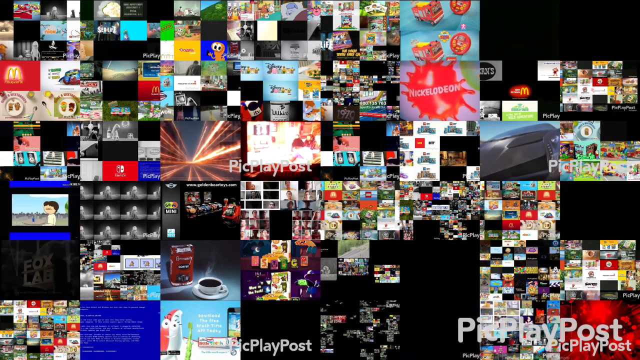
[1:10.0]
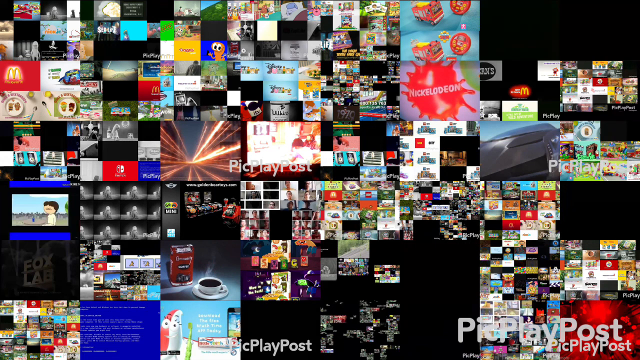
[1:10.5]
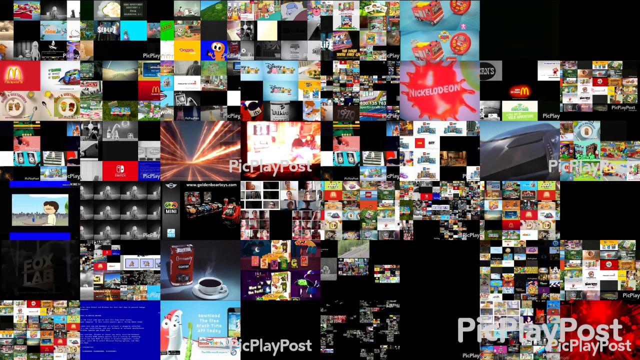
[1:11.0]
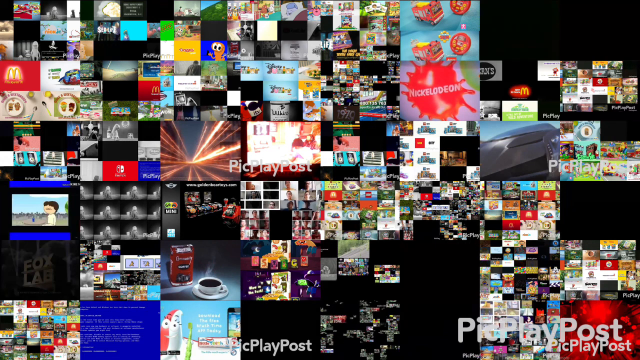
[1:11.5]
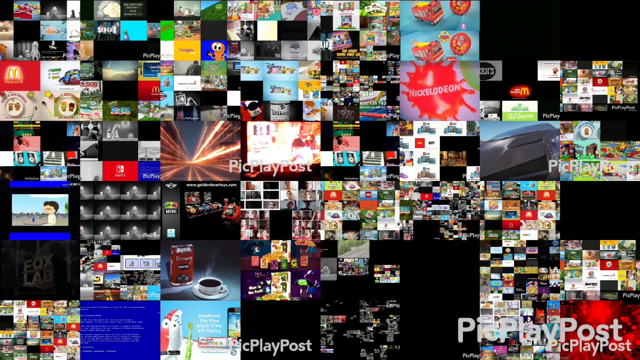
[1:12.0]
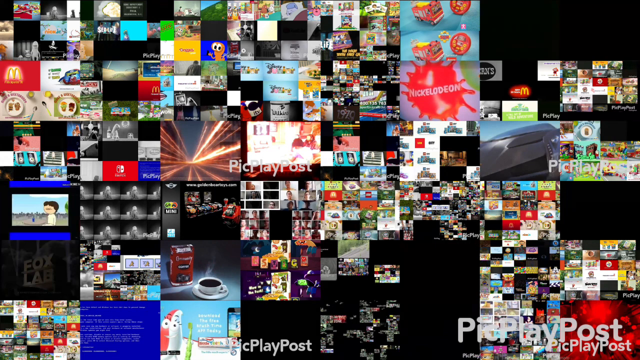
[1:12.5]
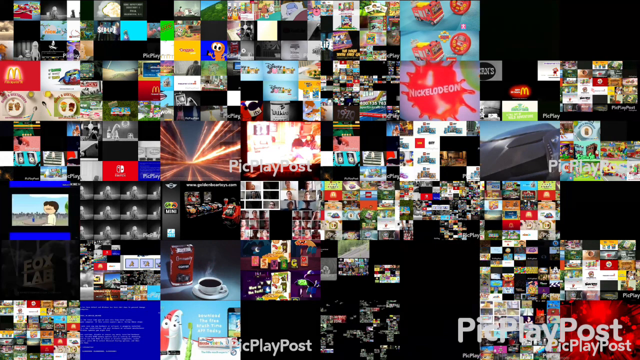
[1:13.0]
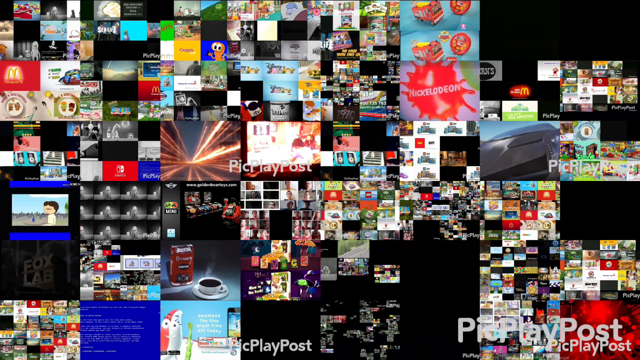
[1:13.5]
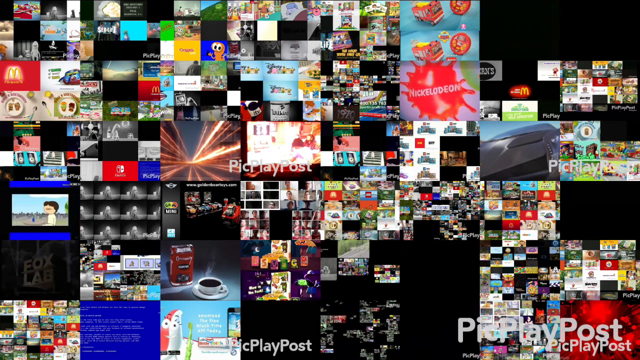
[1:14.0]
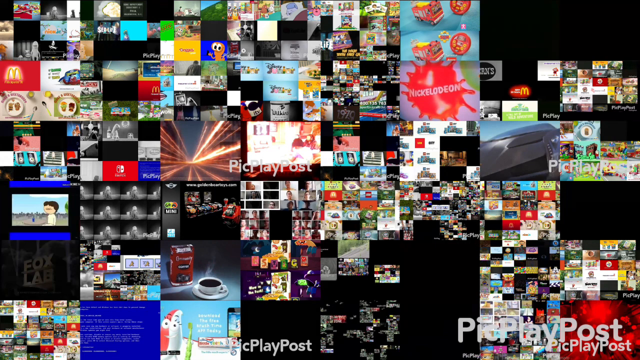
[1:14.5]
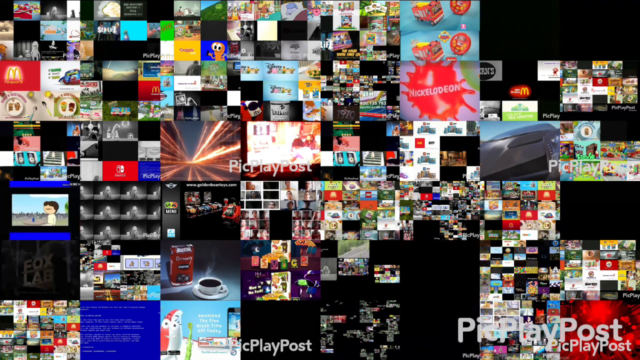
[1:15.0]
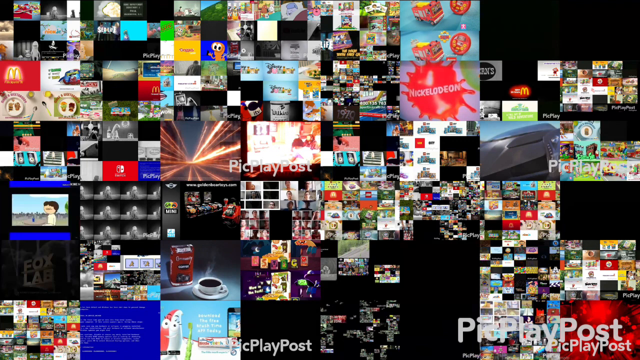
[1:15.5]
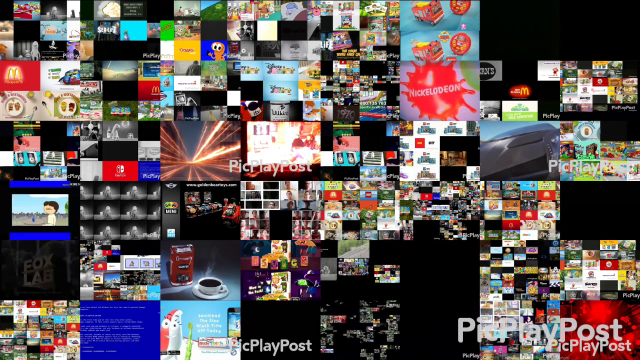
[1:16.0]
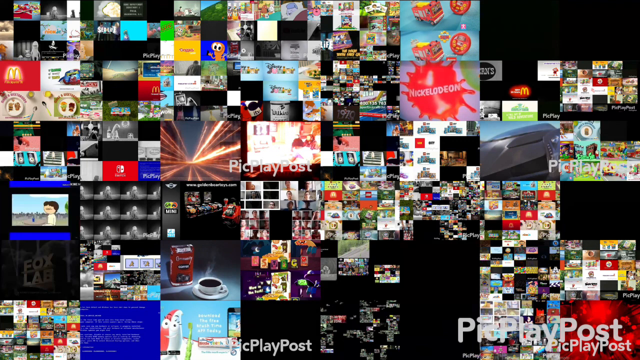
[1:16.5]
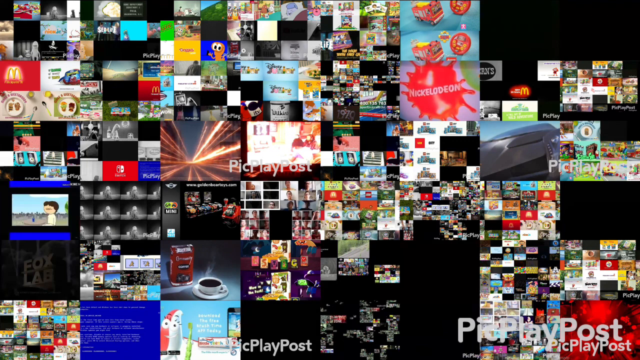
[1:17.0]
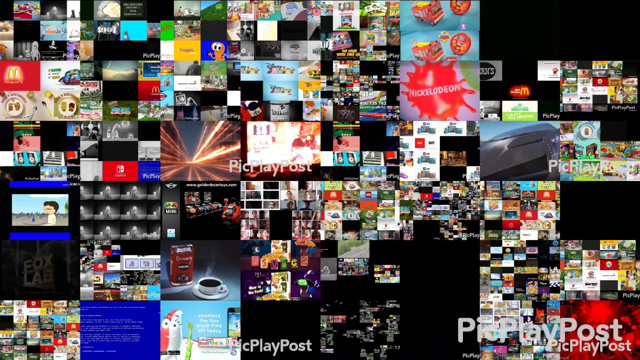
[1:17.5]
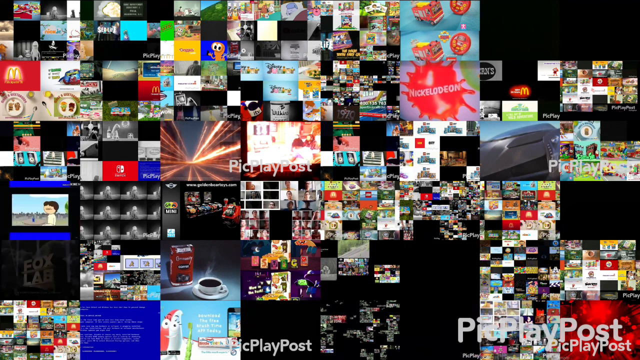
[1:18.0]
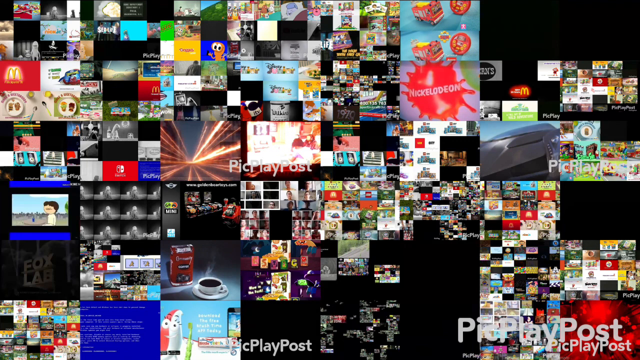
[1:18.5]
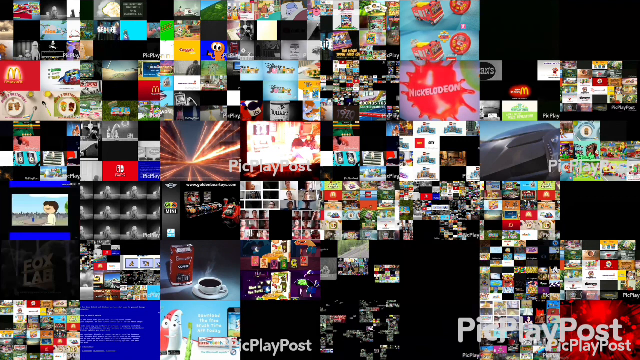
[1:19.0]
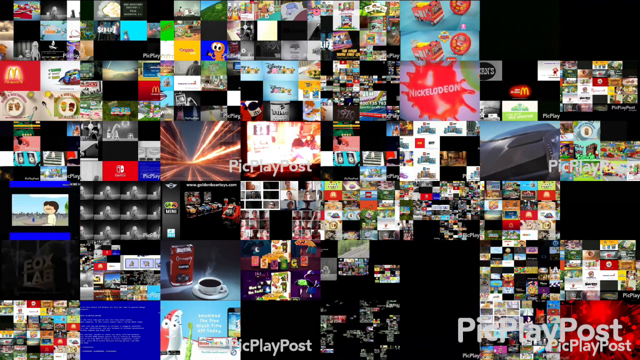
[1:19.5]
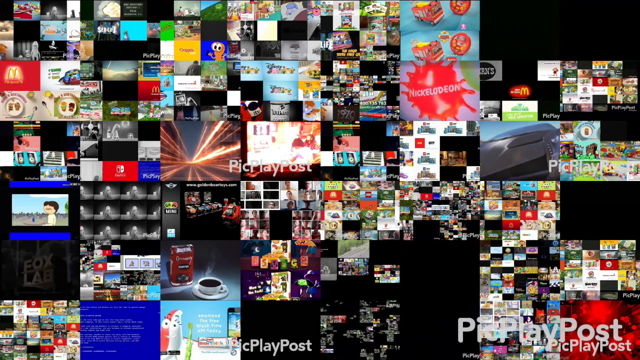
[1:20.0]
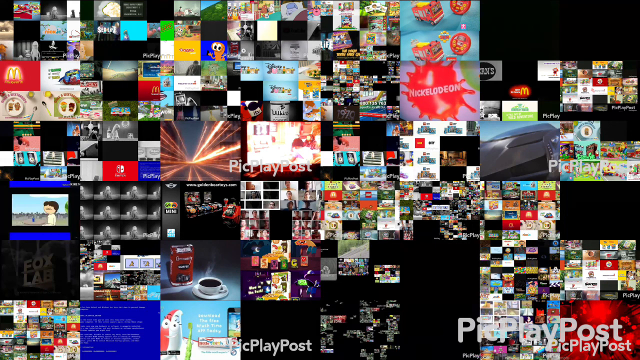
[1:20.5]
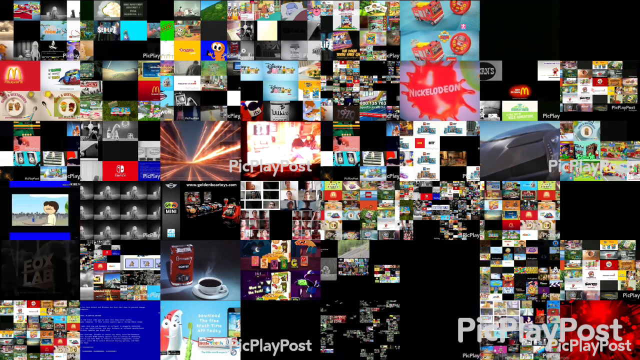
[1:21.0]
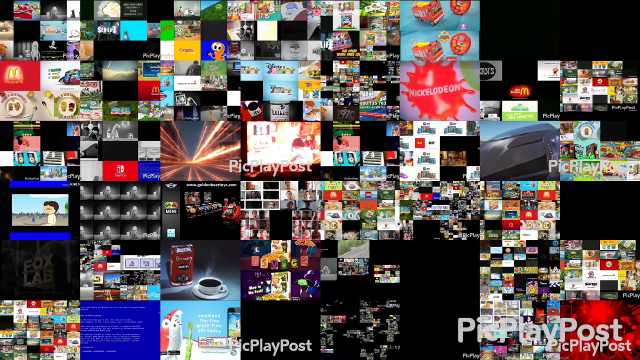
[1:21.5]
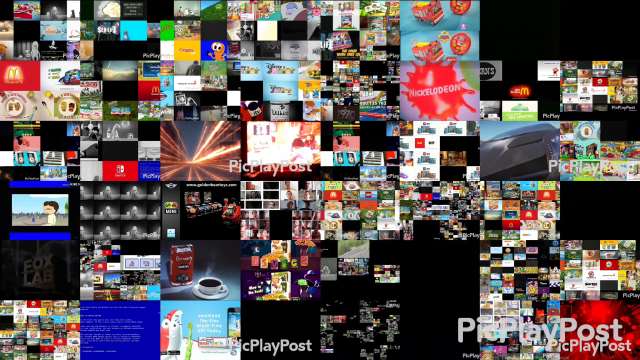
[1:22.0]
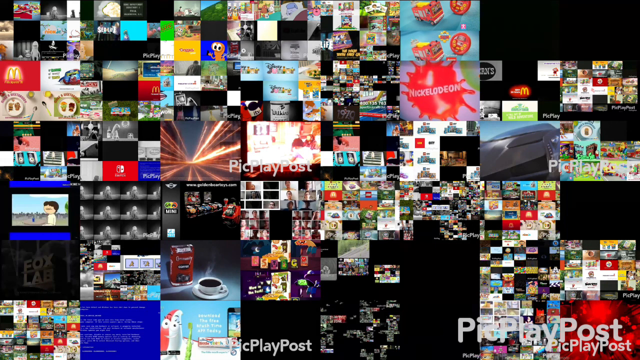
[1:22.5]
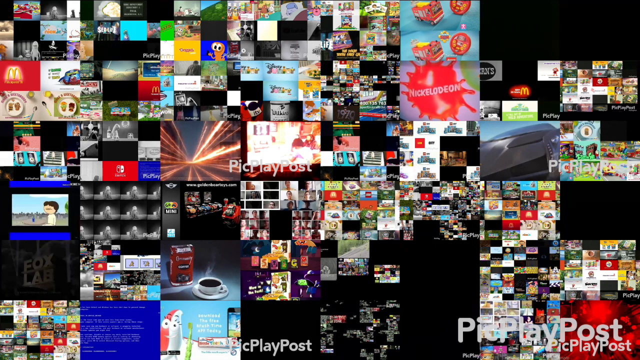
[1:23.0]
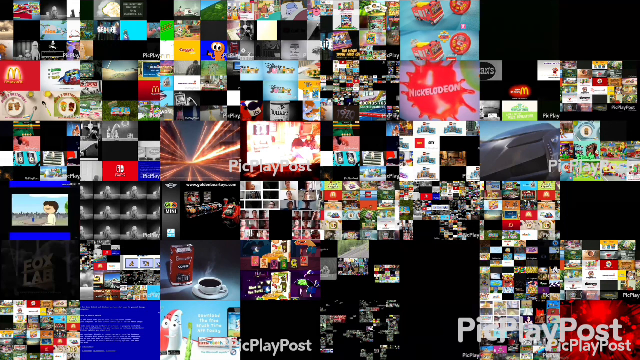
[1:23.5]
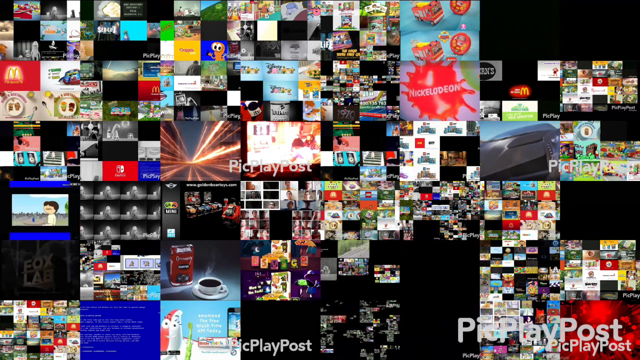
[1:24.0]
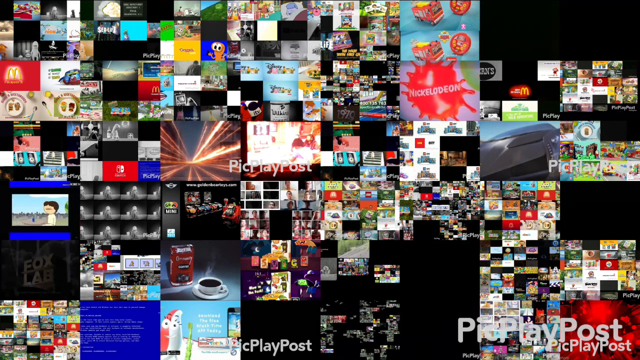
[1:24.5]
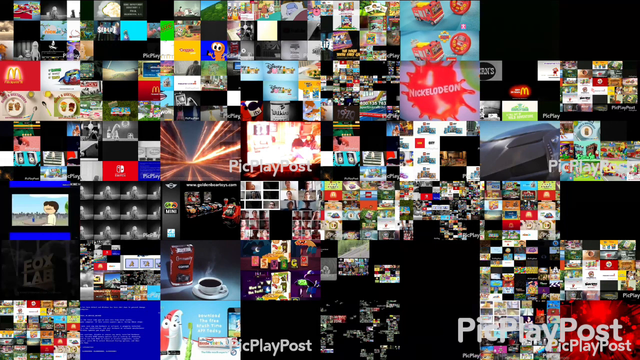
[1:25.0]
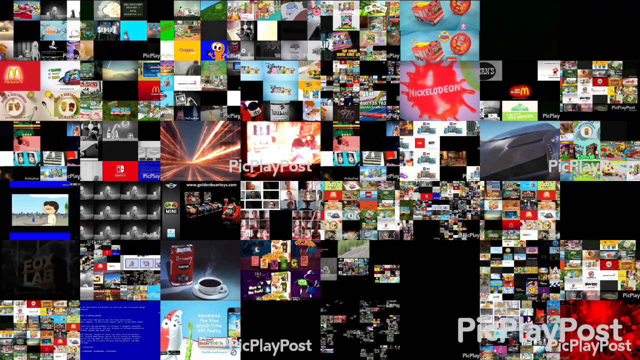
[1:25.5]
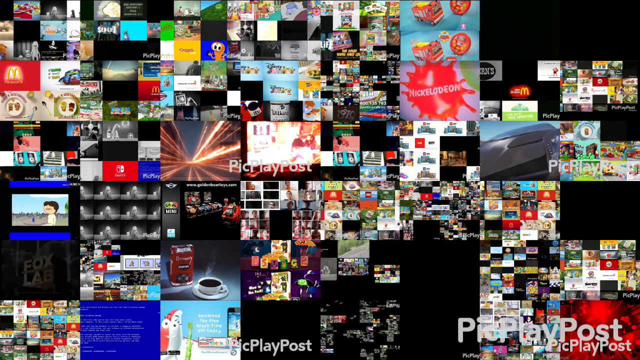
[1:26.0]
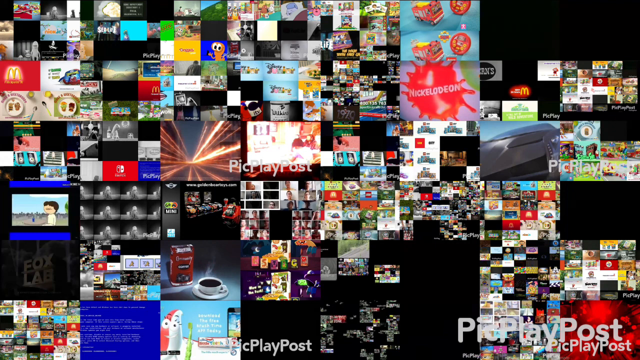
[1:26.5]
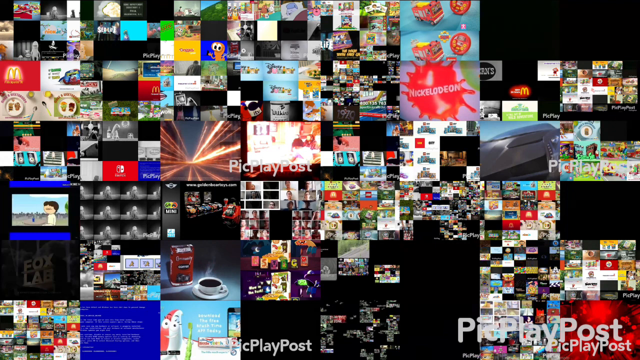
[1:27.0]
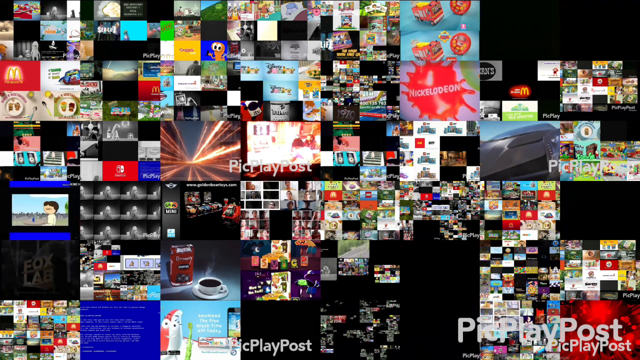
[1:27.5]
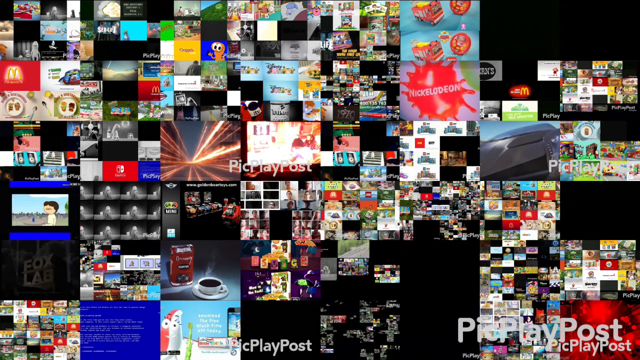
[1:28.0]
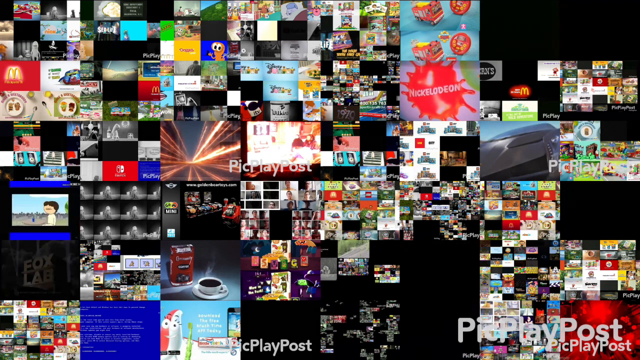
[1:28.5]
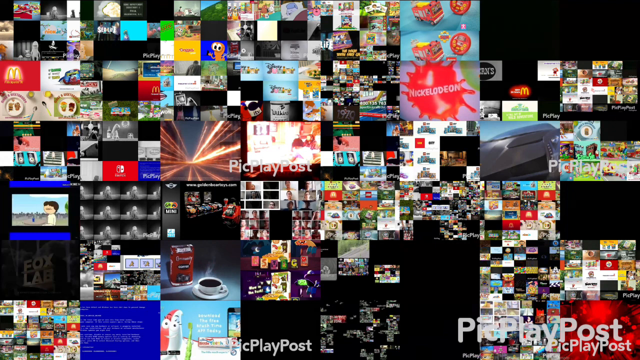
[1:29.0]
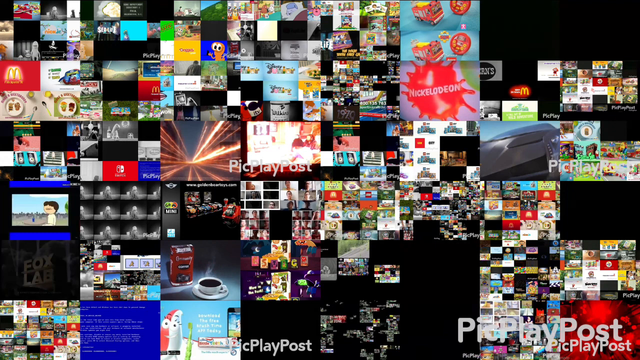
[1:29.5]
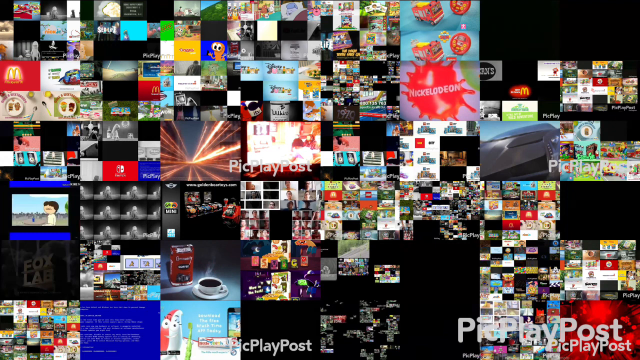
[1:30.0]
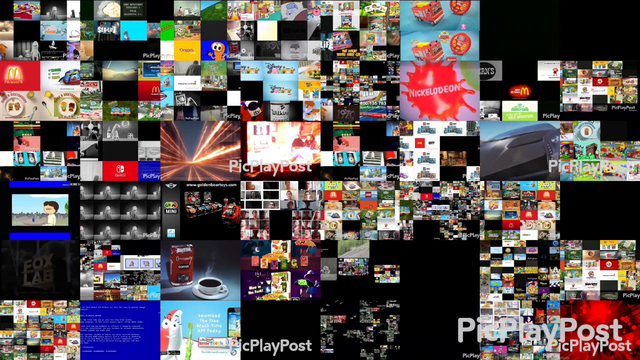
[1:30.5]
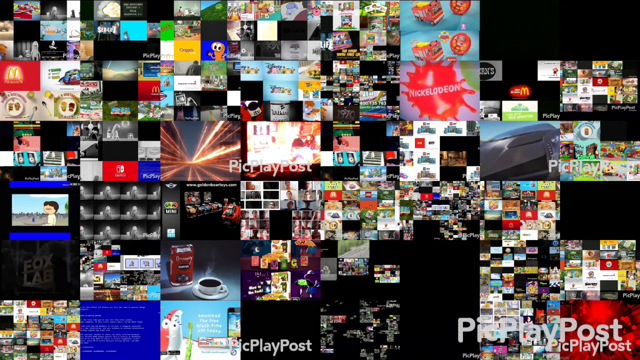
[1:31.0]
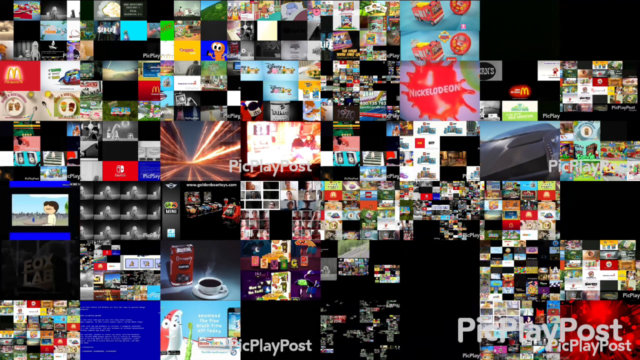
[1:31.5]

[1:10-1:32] The animations keep changing, and in the last scene everything is paused. Readable titles include Nickelodeon, the McDonald's logo on both the right and left sides, Fox Lab on the bottom left, and the "PicPlayPost" watermark all over the video. Different cartoon characters appear, including a black vehicle from the Lightning McQueen, or Cars, movie, probably Storm, since it has eyes. A yellow worm is on the middle left of the video. On the middle bottom, a collage video shows different children. On the left side are purchasable toys in different colors: red, blue and yellow. On the bottom, slightly to the left, is a yellow and white banana with two eyes.